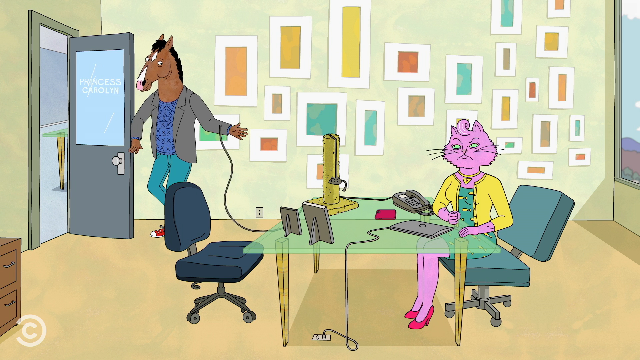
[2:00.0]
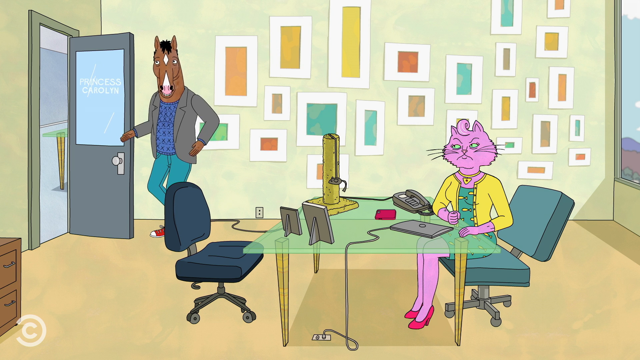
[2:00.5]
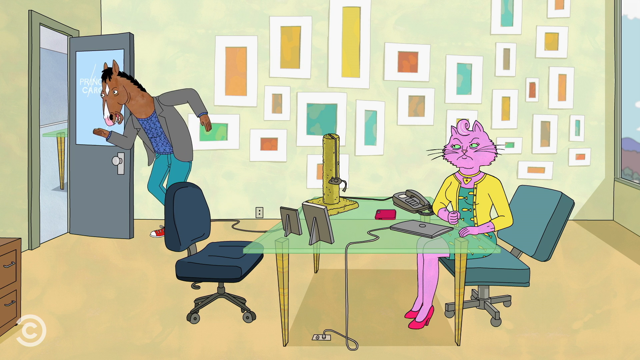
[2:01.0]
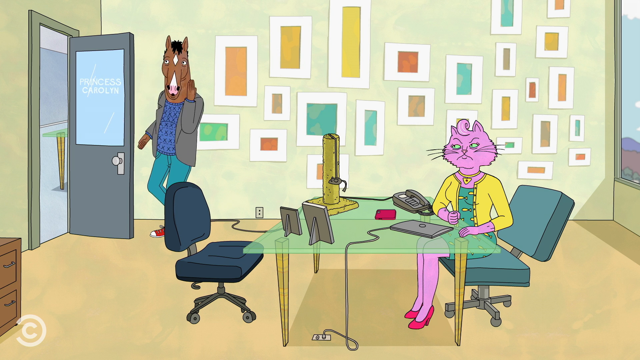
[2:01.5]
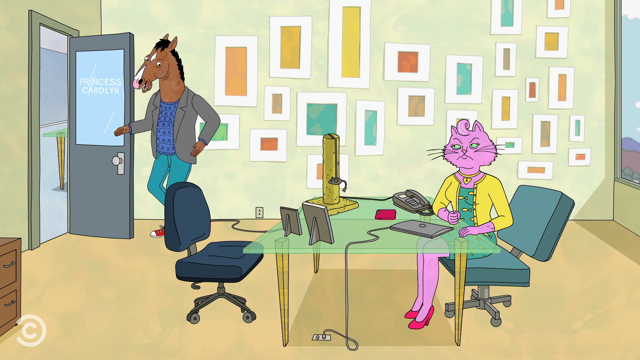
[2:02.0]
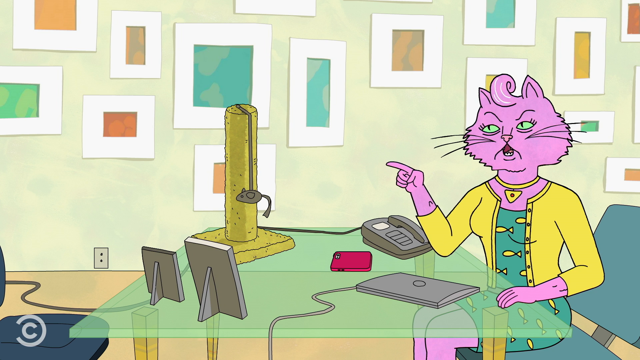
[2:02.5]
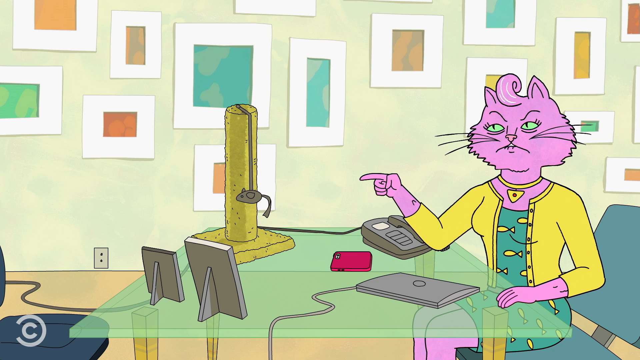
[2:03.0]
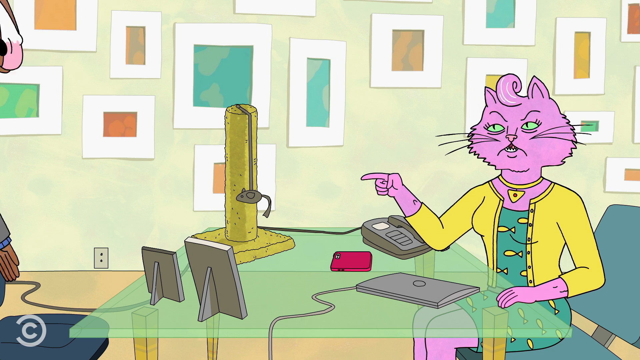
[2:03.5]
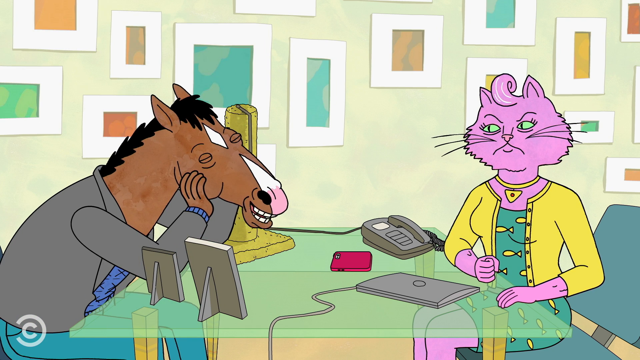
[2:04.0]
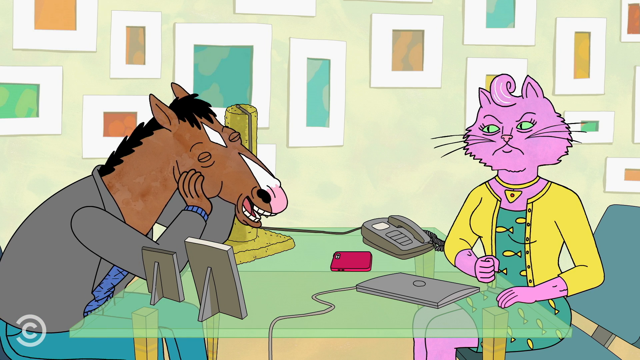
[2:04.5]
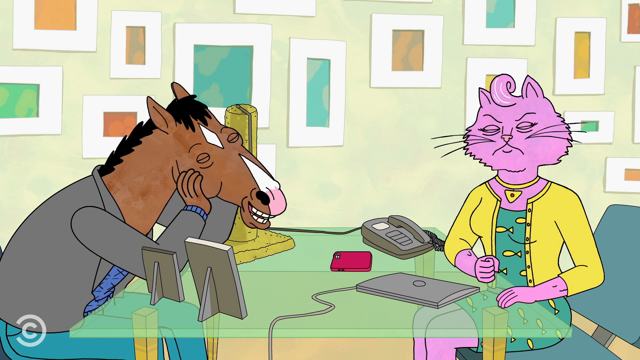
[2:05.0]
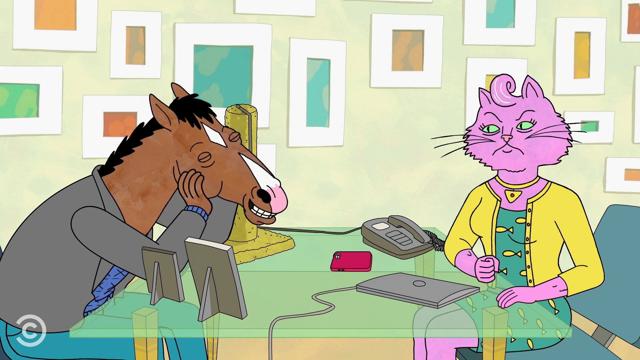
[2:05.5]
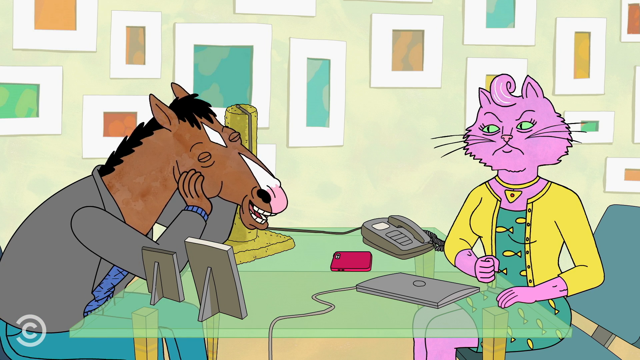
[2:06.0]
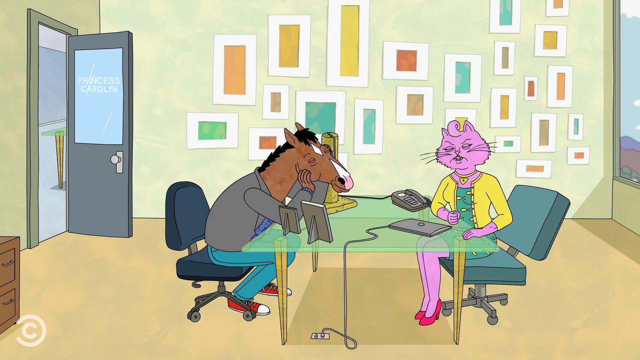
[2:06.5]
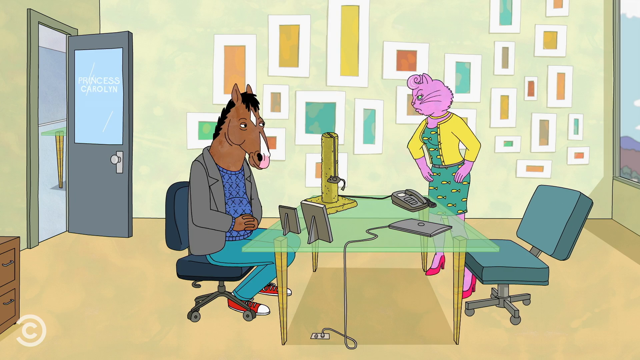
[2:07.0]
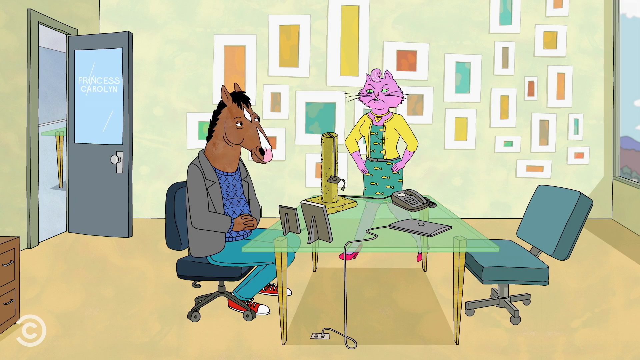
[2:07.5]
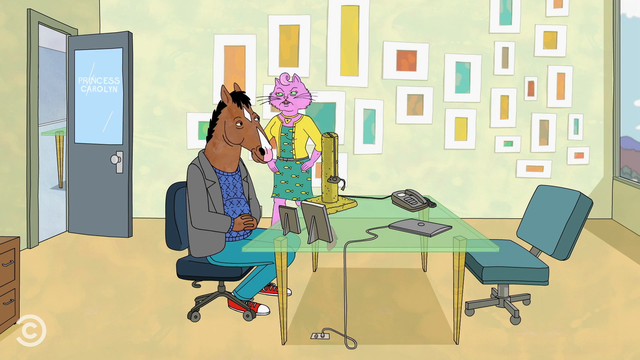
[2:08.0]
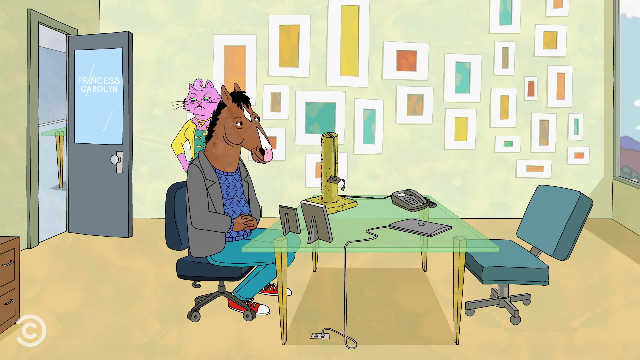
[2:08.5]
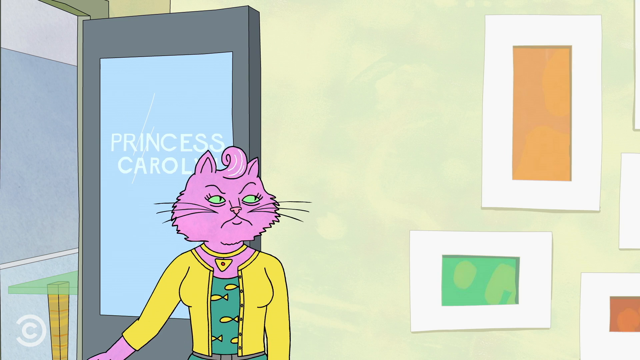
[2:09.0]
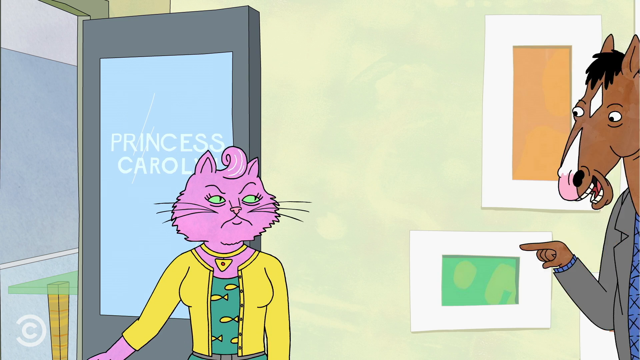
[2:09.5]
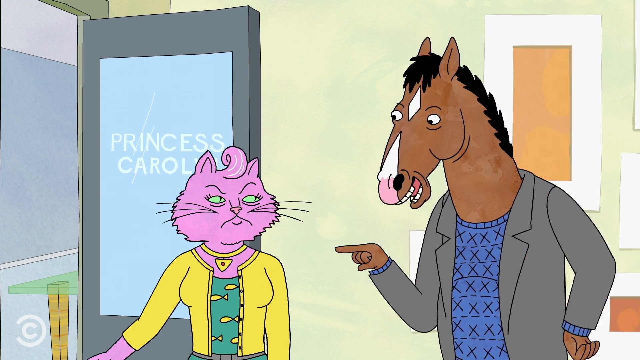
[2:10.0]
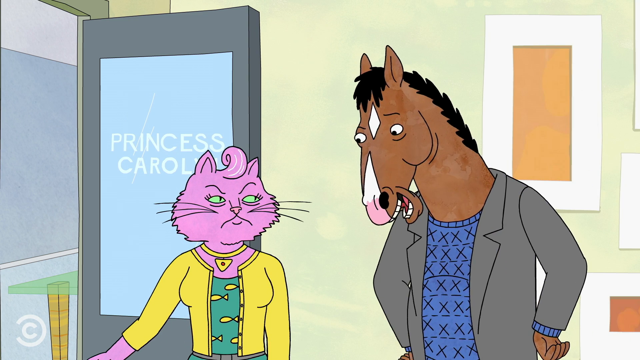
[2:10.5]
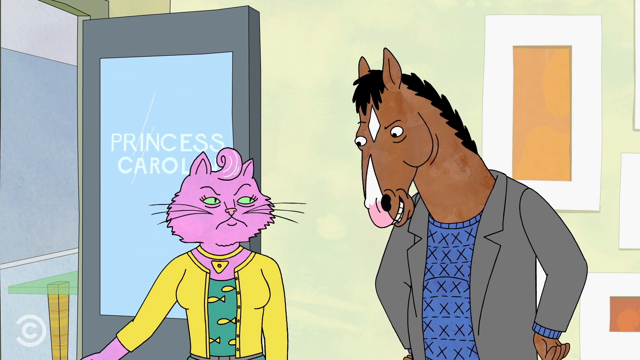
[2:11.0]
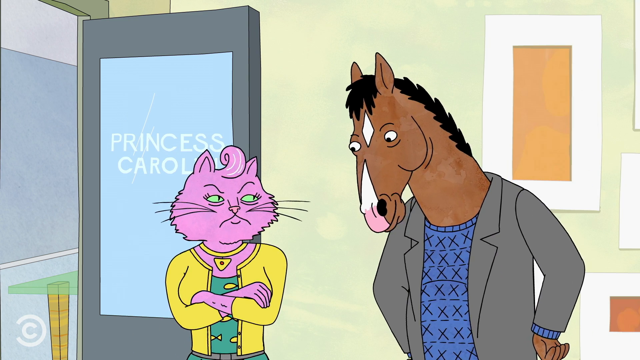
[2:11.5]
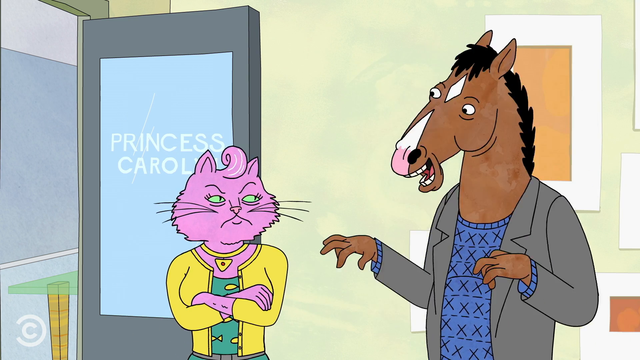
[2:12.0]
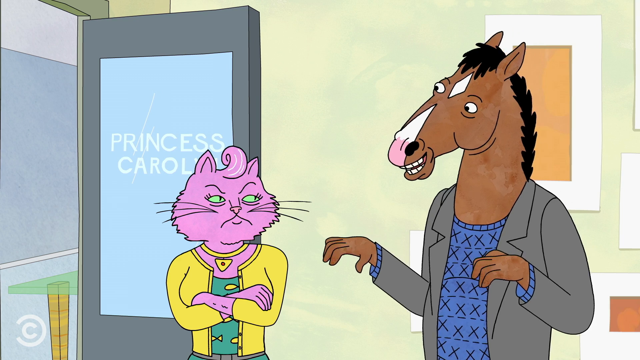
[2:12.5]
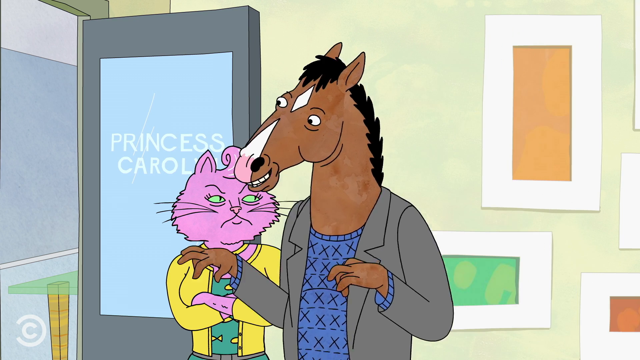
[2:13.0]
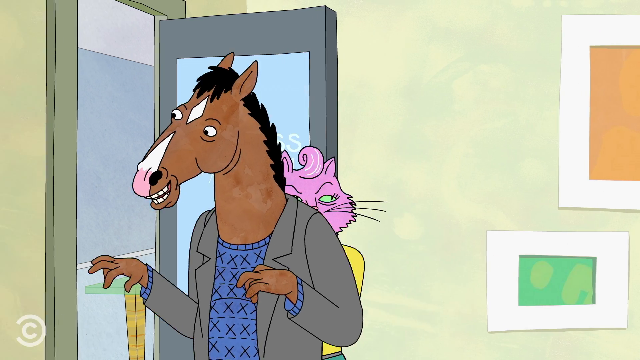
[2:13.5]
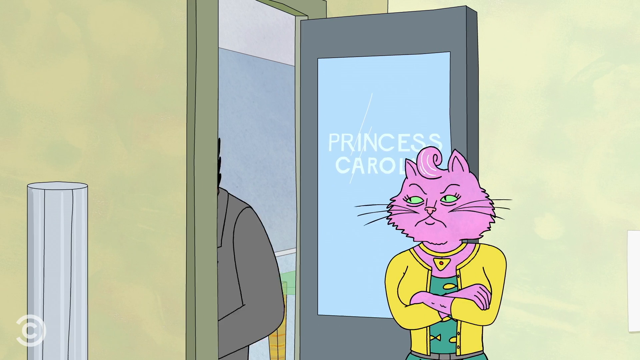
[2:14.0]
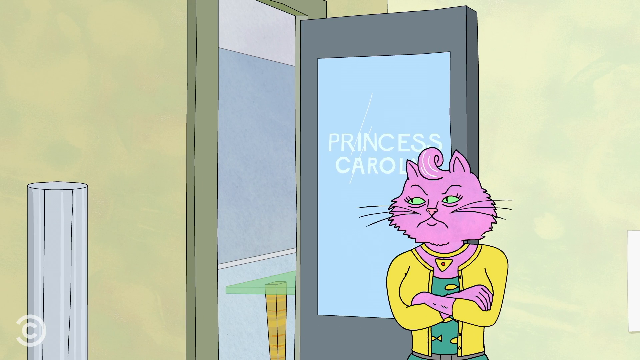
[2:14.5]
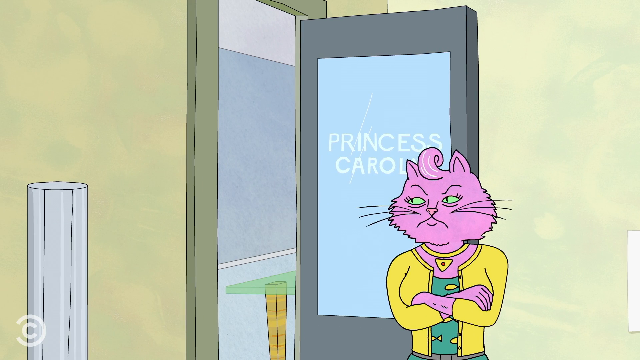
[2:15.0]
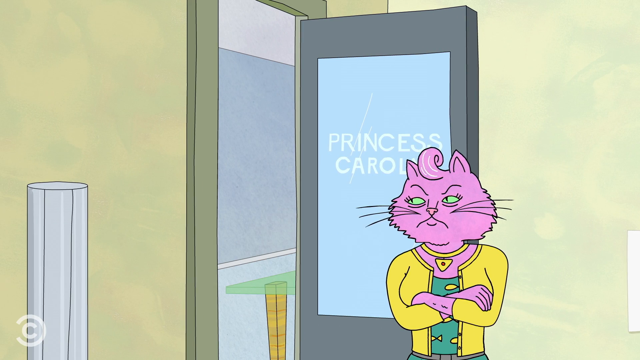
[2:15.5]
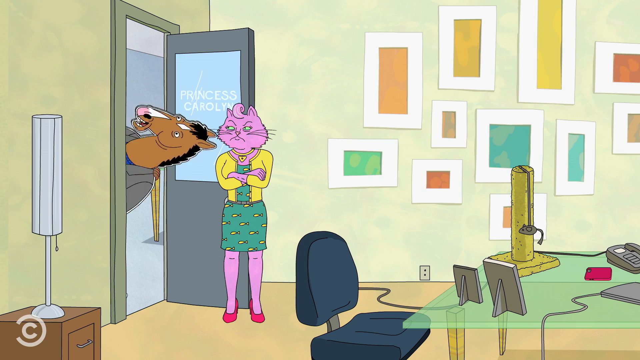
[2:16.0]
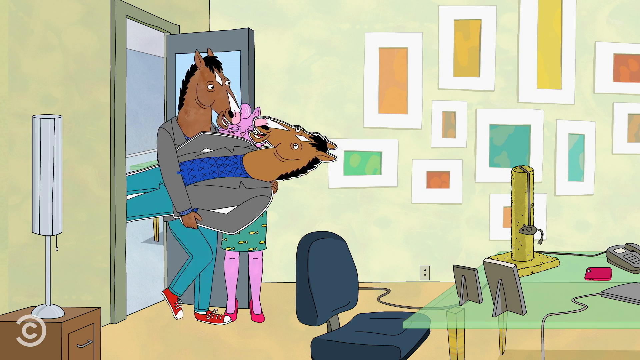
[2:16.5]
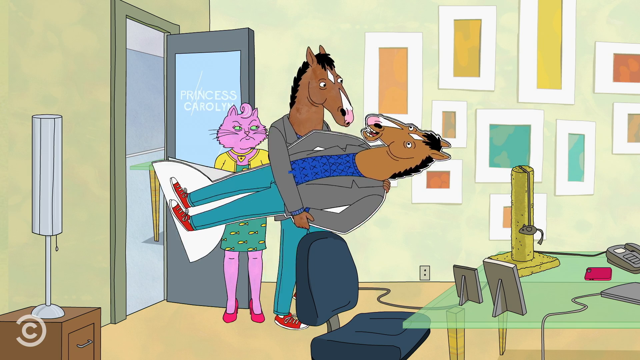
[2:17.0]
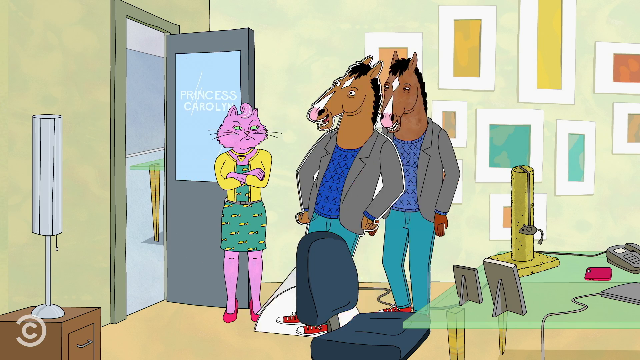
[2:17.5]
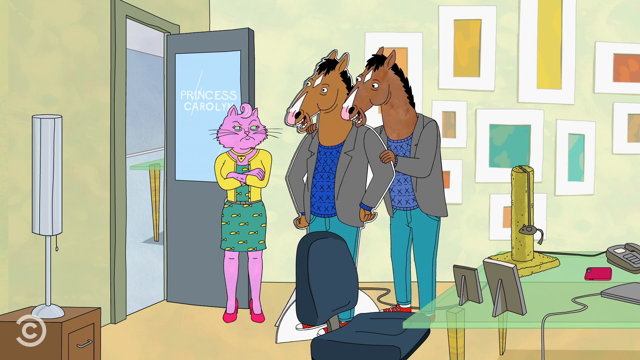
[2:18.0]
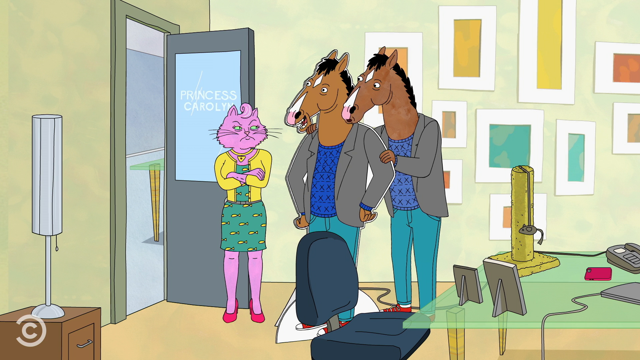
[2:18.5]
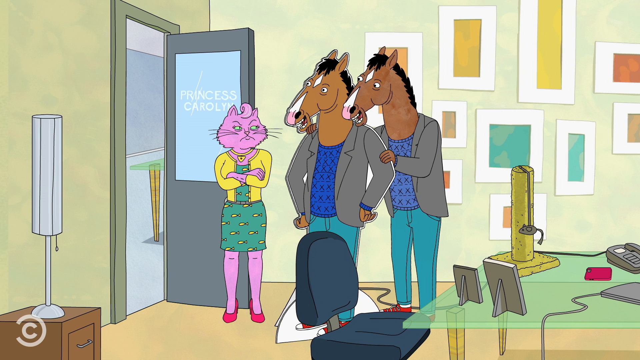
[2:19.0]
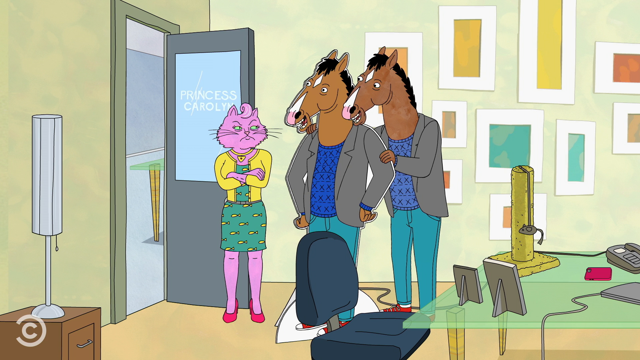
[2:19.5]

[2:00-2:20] The horse drops the telephone wire, puts his hand in his pocket, then gestures his hands up and down facing the door. A close-up shows the cat at the table with the cat scratching post and the photo frames; the laptop is closed and her red phone lies upside down on the table. She points toward the horse and starts talking. The horse appears from the left, leans down with his elbows on the table and his hands on his head, then sits down. The cat stands up, walks around the end of the table and toward the horse with her hands on her hips. A close-up shows the cat standing in front of the office door, whose glass bears the words "Princess Carol". From the right of the screen the horse approaches her, pointing at her and getting closer. She folds her arms and looks at him as he talks. He walks out the office door while she watches, then comes back in carrying a cardboard cutout of himself sideways. He sets it upright and shows it to the cat, who stands with her arms folded looking very unimpressed, and he stands behind the cutout looking at her while talking.